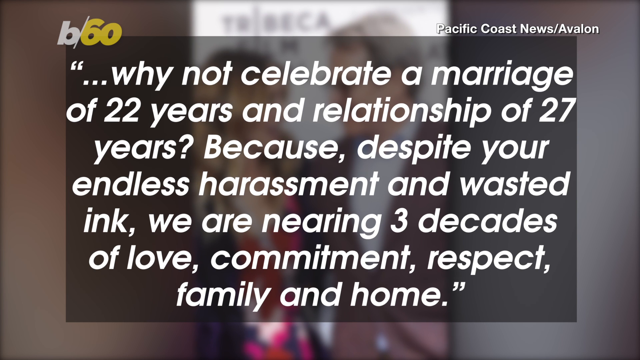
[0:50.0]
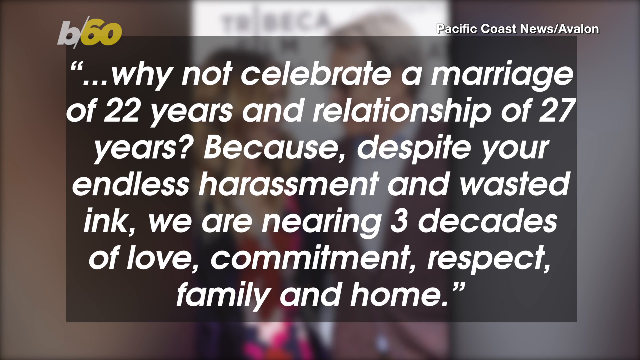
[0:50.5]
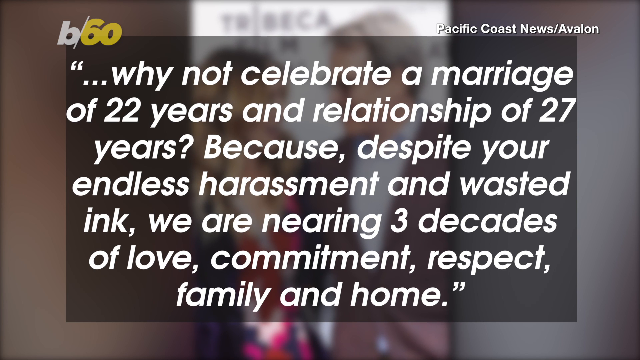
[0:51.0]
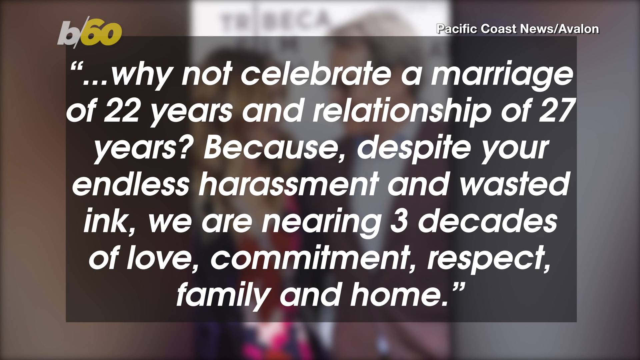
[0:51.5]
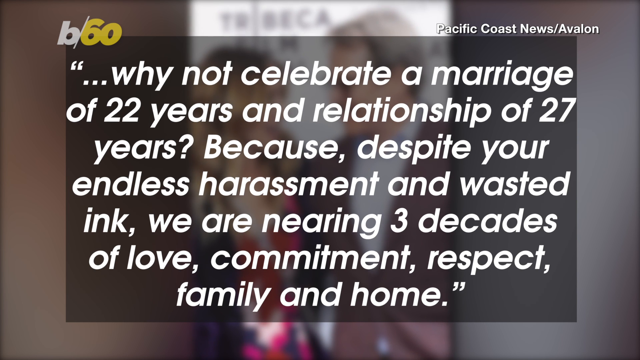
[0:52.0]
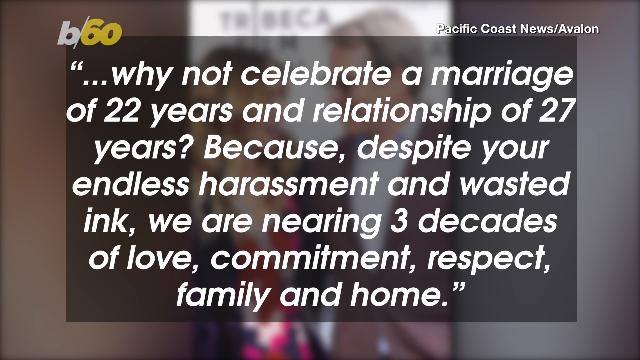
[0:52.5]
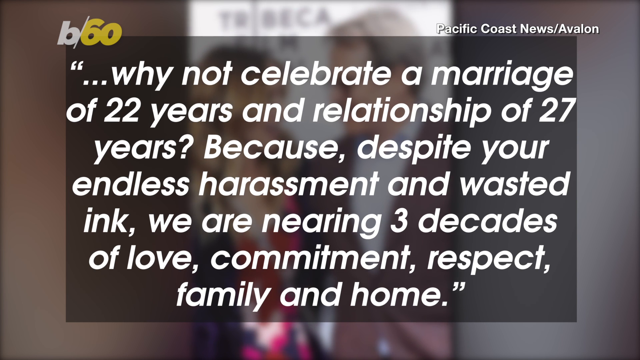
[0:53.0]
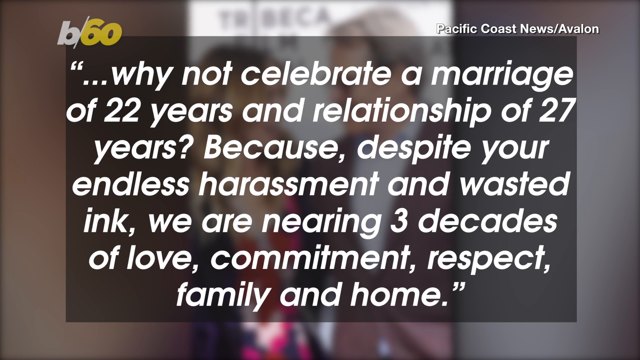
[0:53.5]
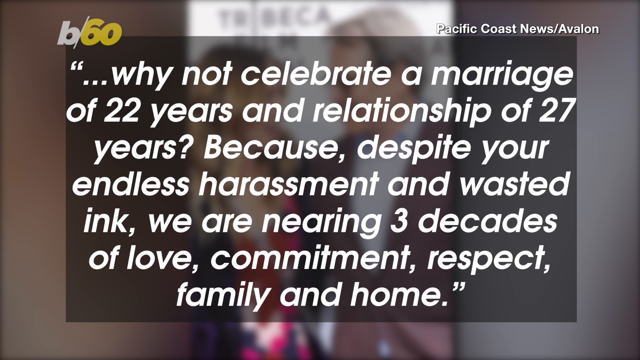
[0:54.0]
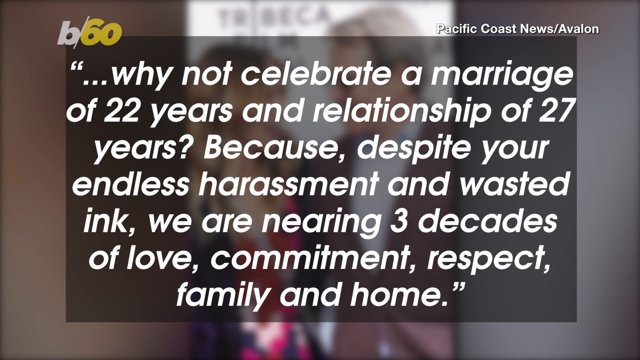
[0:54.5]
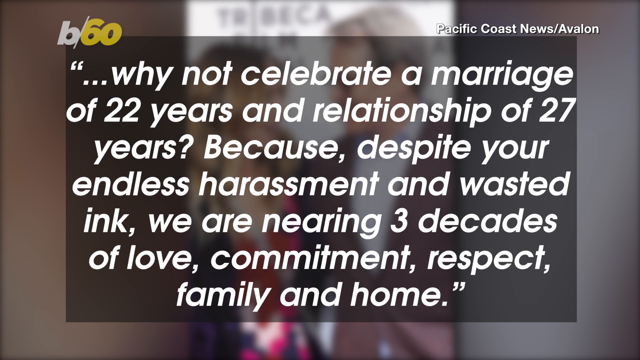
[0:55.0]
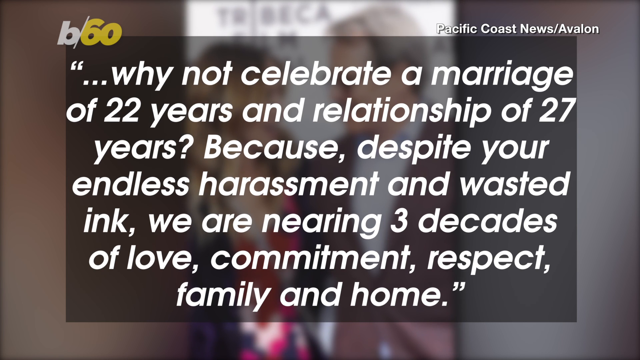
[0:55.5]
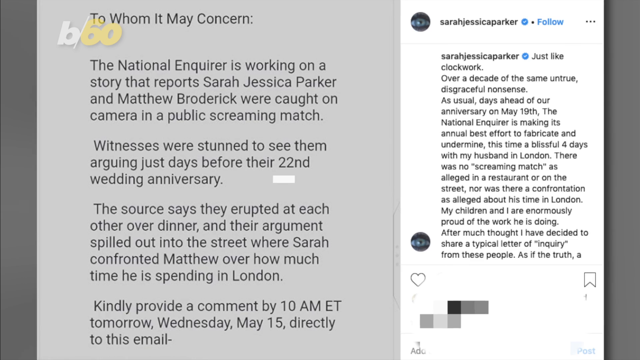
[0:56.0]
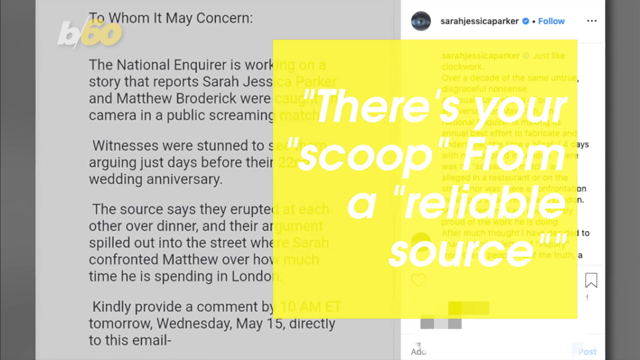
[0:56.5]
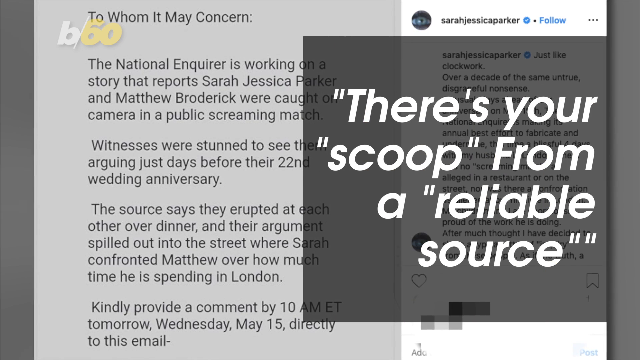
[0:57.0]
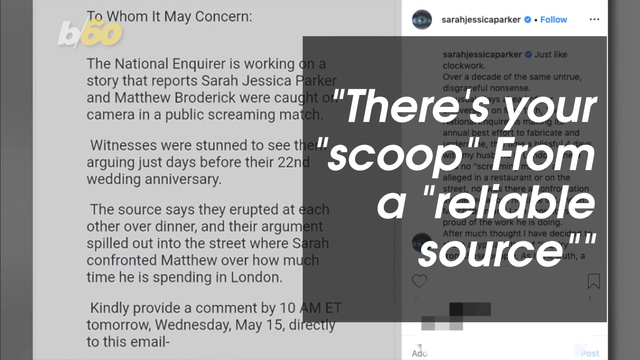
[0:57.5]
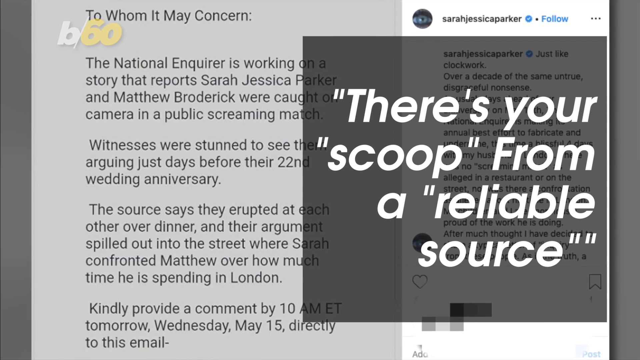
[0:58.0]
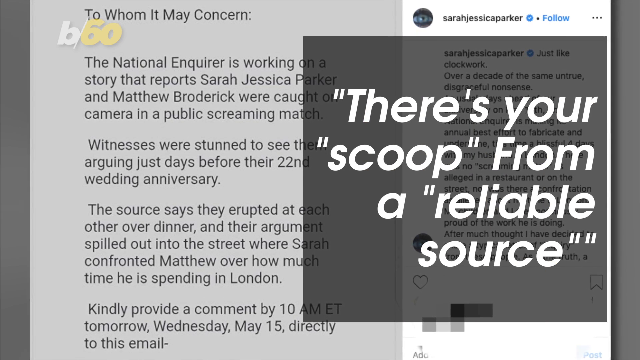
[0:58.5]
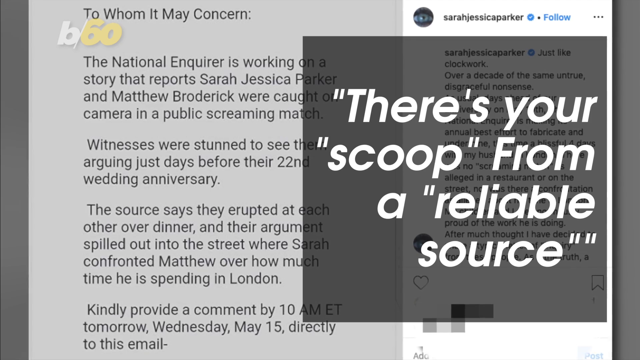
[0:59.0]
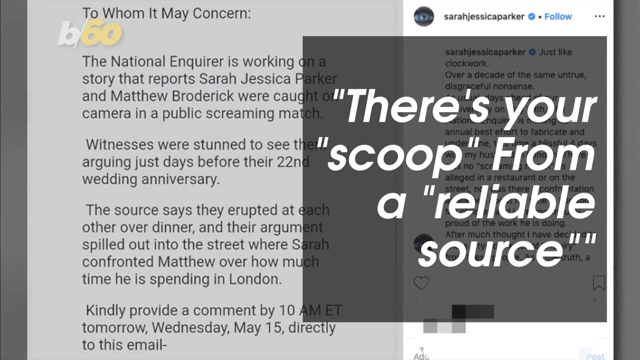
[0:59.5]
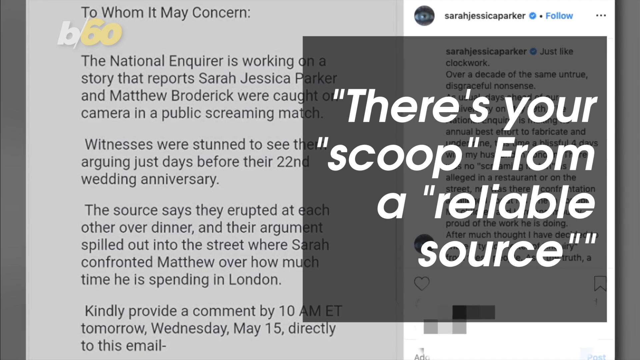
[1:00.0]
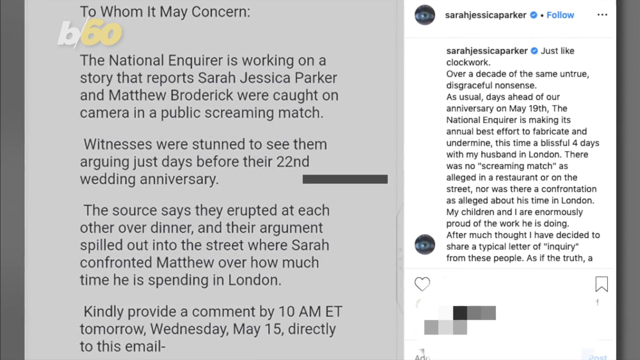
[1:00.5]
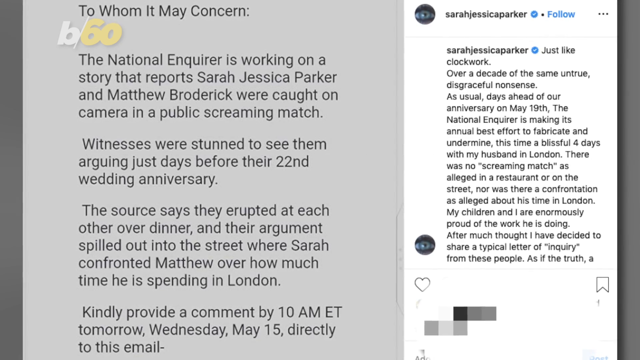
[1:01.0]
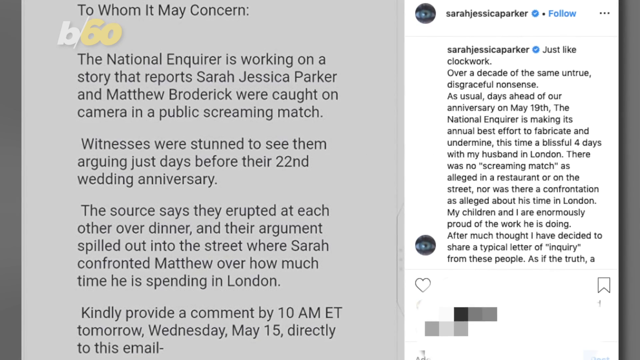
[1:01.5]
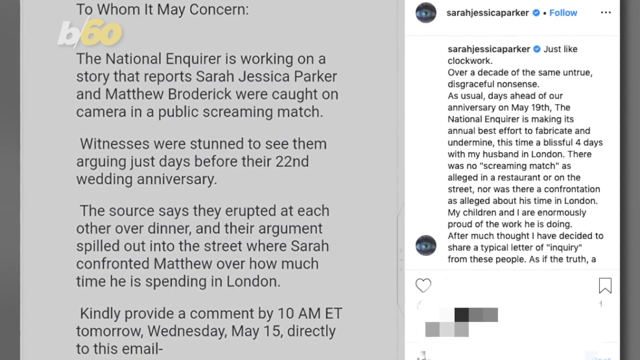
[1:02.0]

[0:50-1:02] The same image and text remain on screen, then the video transitions back to the image of the text on the gray and white background. On the right side there is an animation: a yellow color sweeps over the left side in a gray rectangular background, with text above it as the yellow sweeps over to the right. As the yellow goes by, the gray translucent background takes shape, and white text in the middle says "there's your scoop from a reliable source". This is shown for a moment, and then the text goes away and the background minimizes.